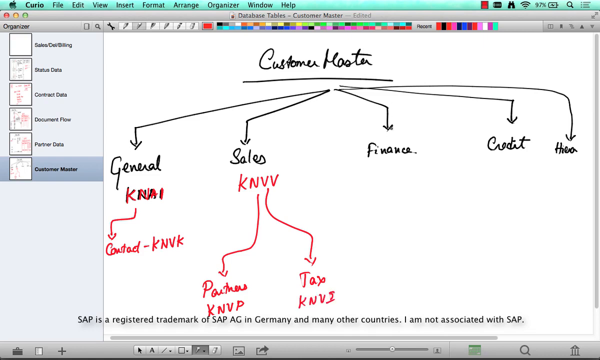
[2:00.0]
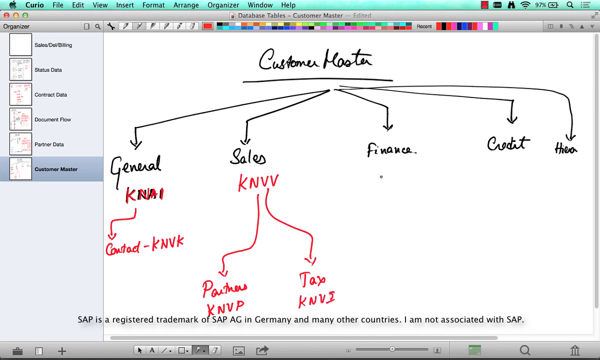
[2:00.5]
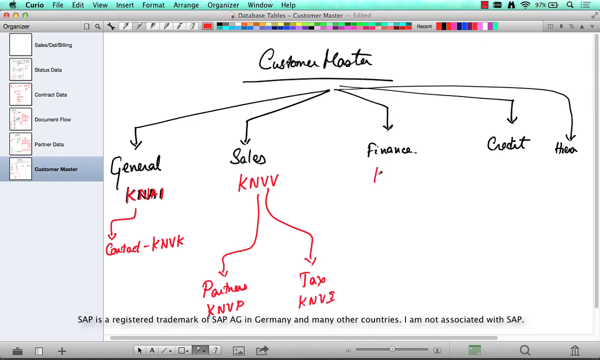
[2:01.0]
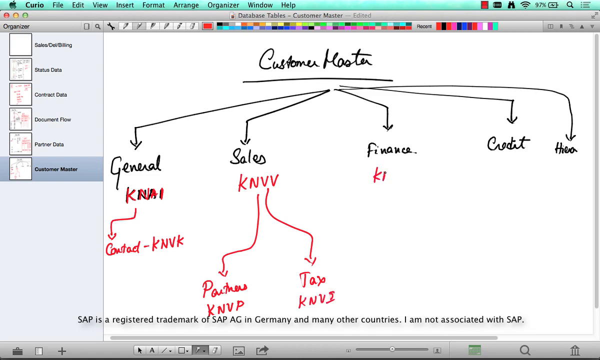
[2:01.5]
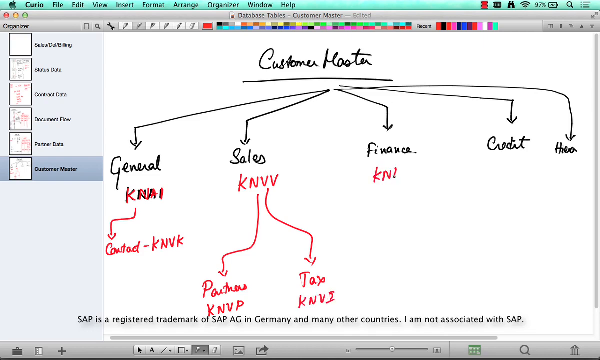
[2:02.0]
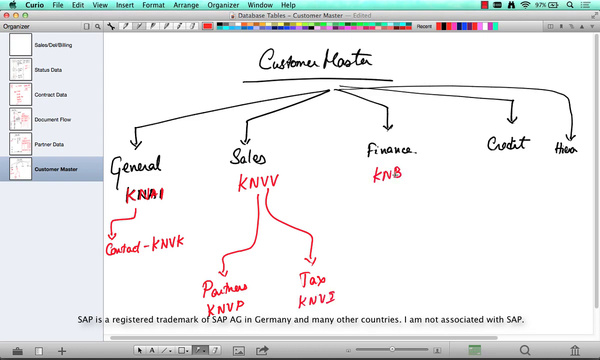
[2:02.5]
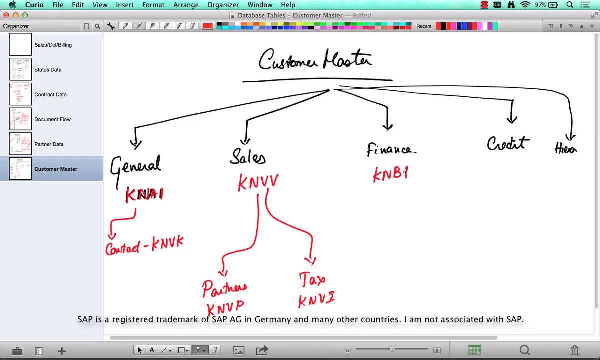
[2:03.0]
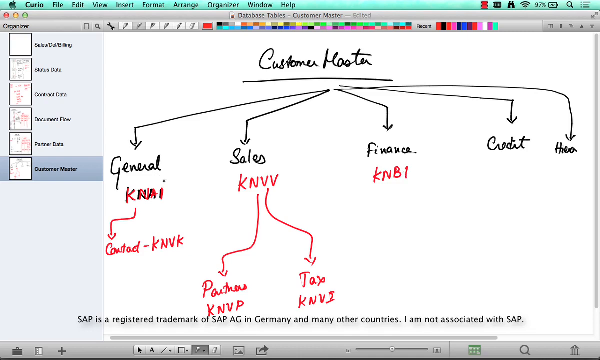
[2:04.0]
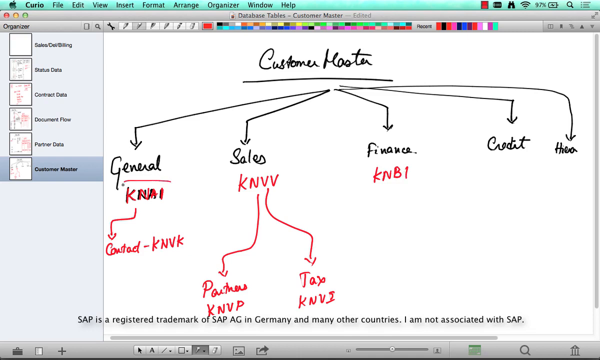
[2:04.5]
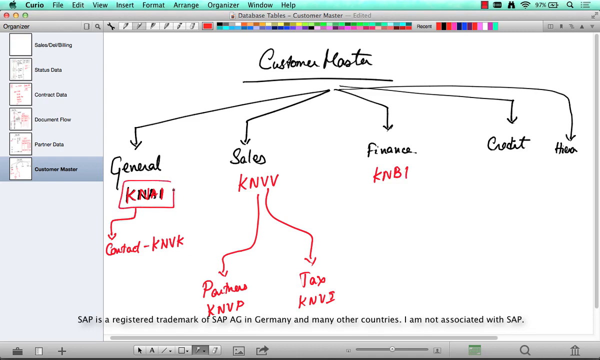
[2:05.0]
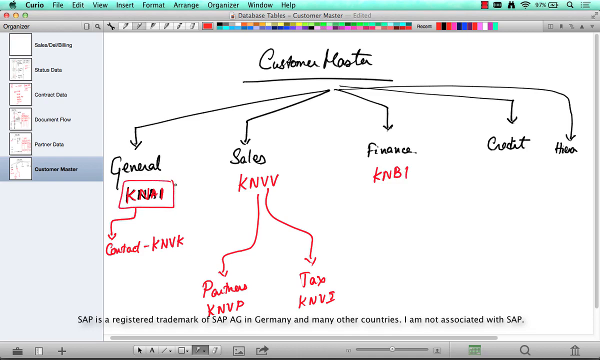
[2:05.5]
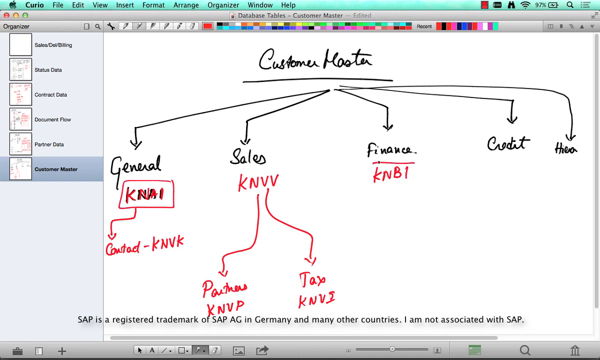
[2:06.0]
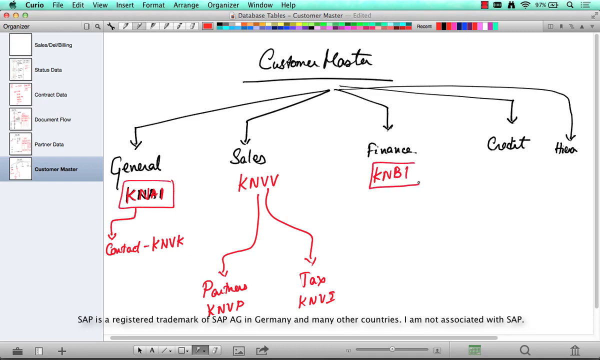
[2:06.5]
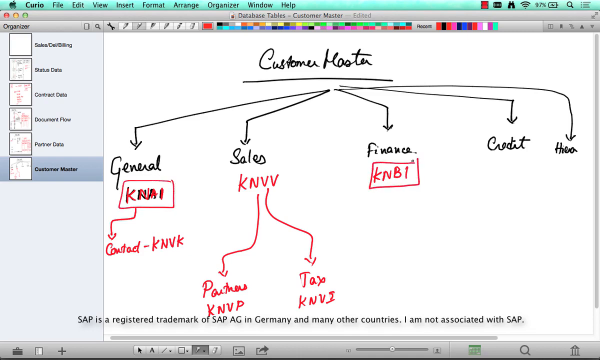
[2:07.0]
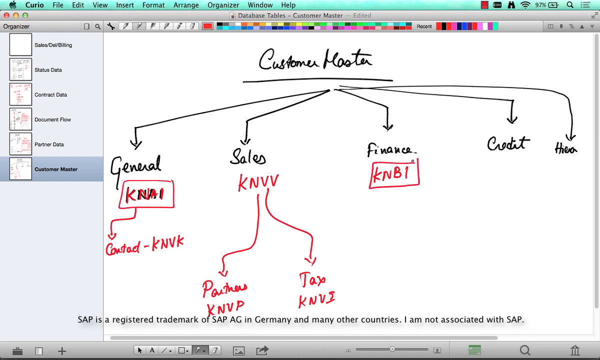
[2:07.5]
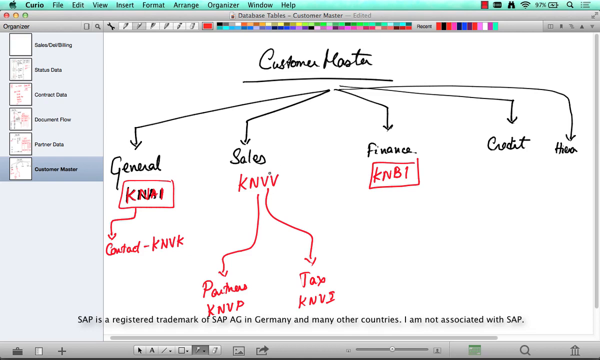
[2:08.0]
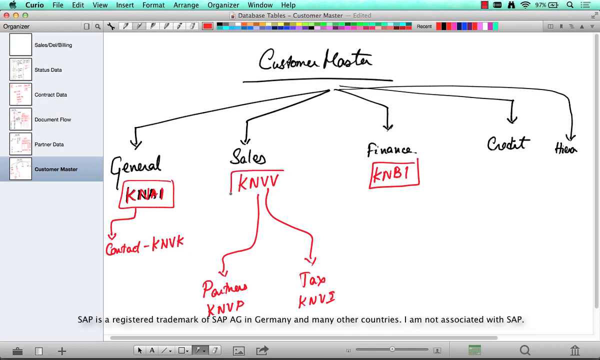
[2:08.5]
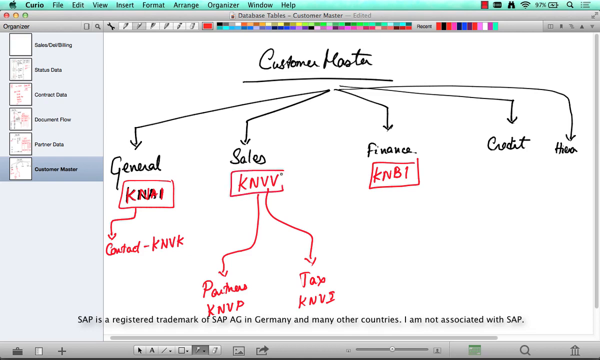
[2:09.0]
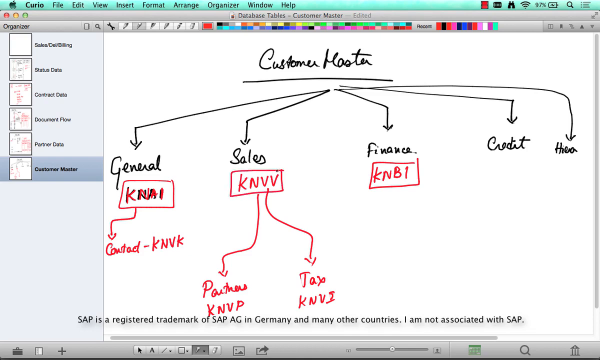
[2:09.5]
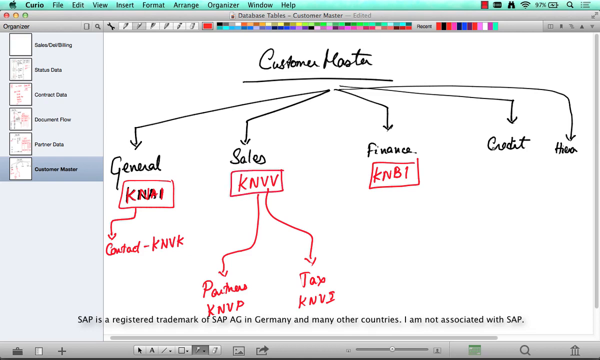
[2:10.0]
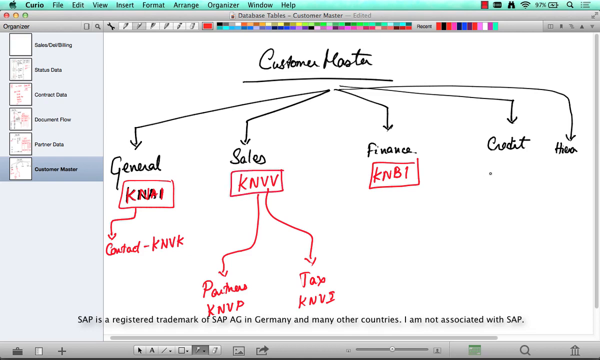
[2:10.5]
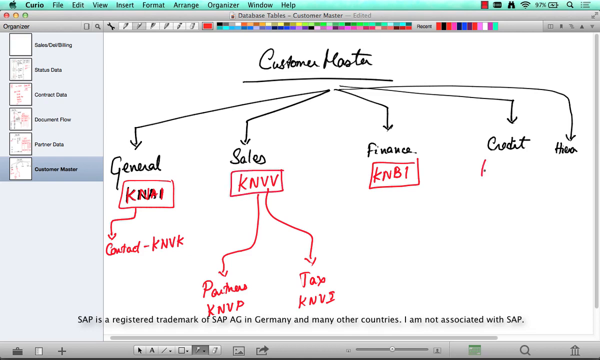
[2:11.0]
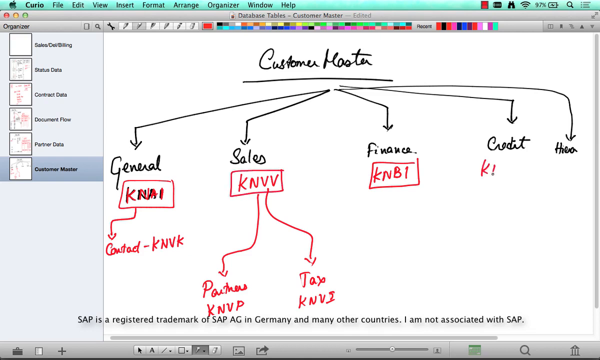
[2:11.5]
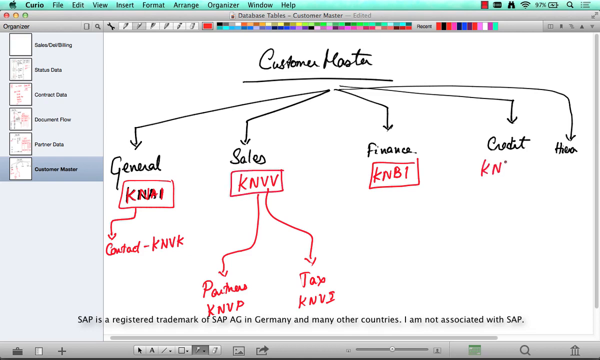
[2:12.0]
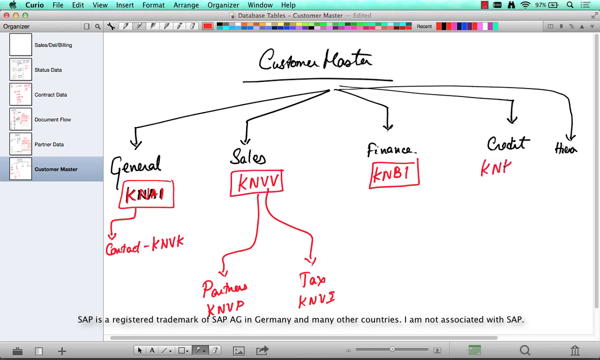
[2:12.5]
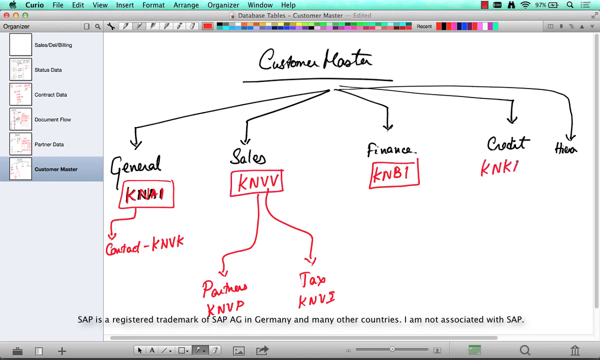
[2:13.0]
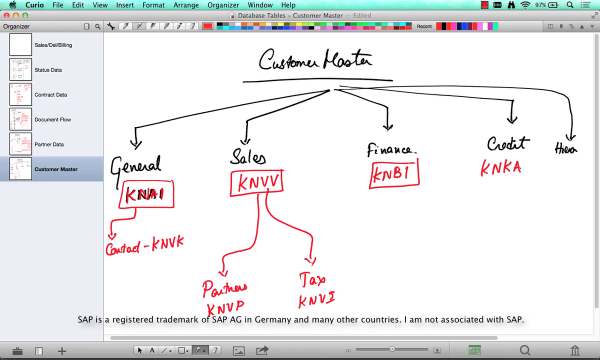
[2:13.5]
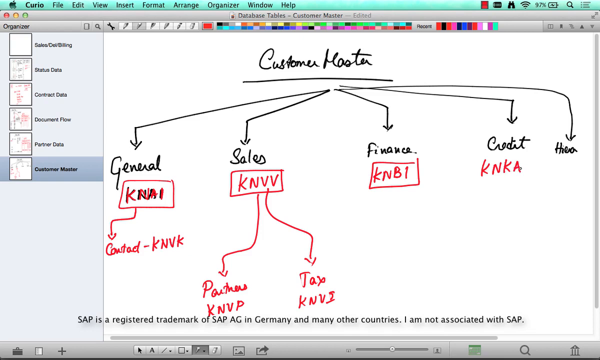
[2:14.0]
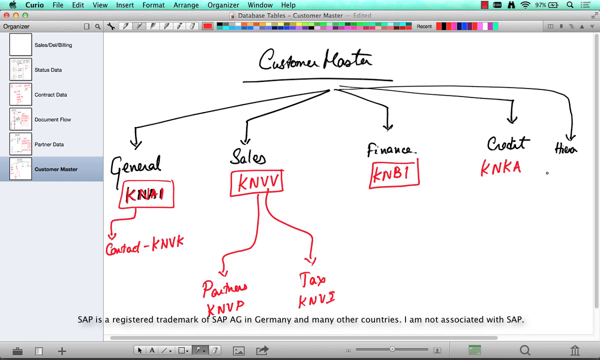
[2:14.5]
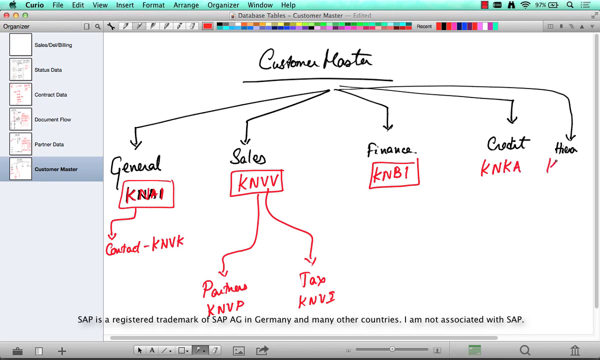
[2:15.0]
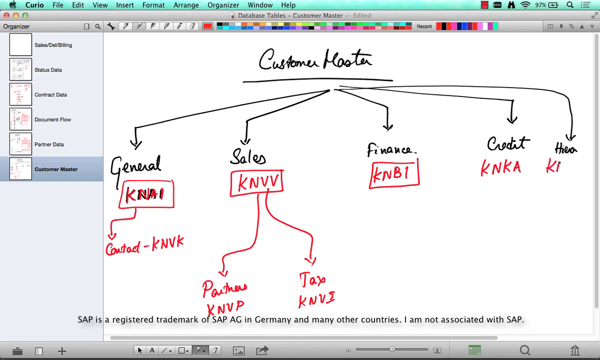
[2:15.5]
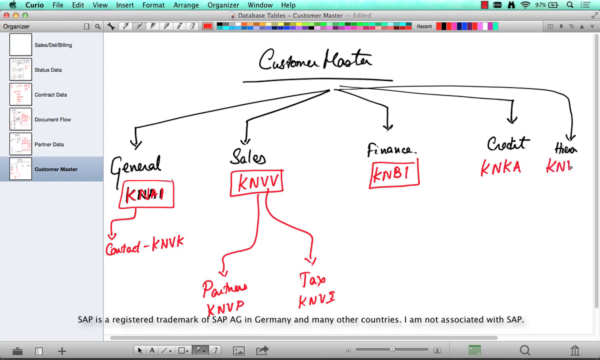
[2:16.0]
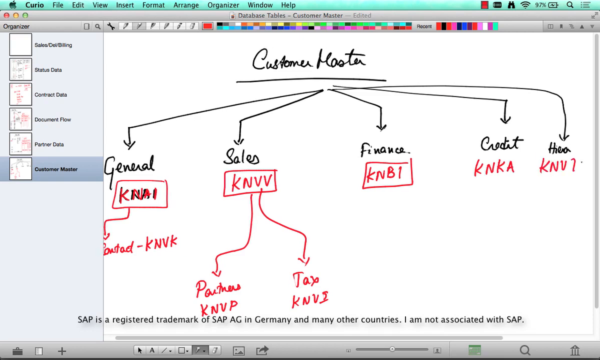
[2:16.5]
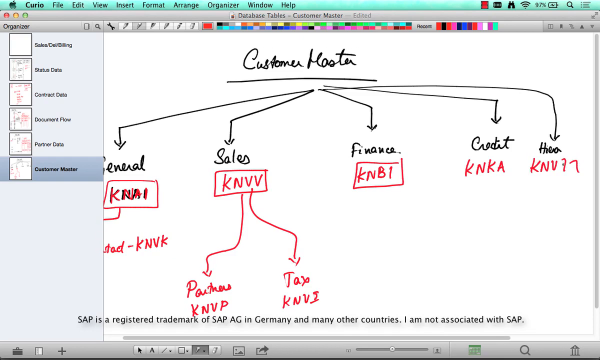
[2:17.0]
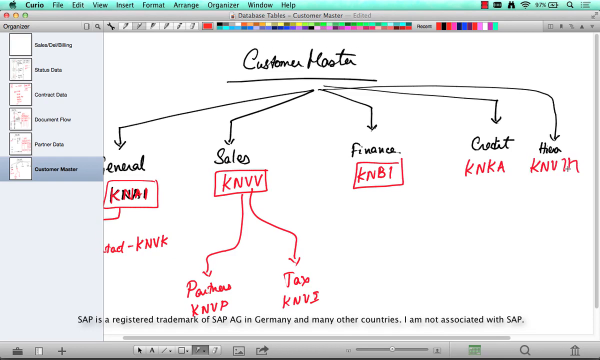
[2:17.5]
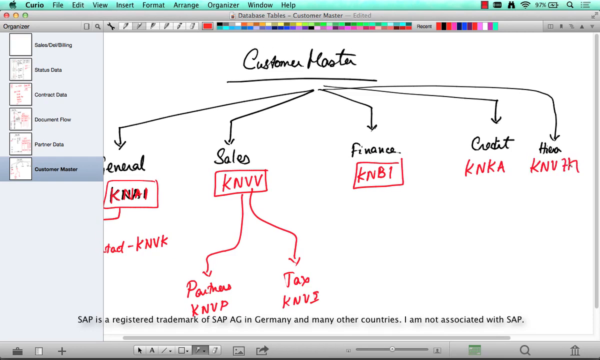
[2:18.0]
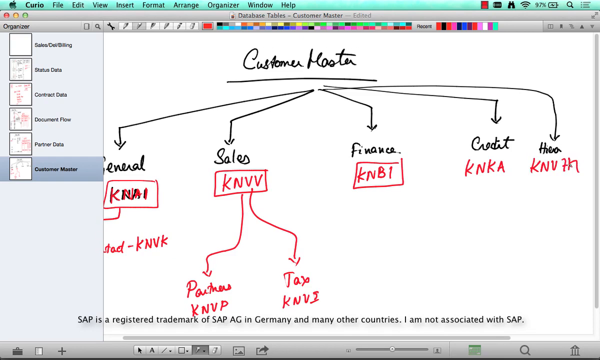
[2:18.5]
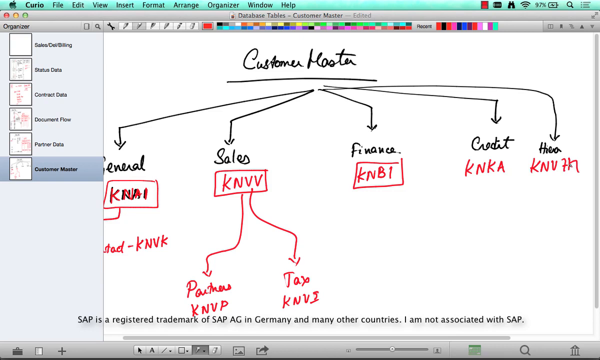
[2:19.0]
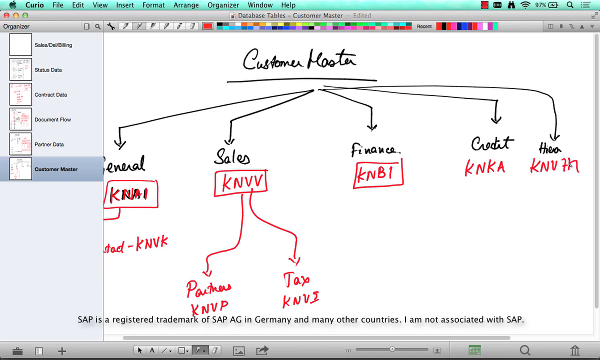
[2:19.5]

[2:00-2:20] Under the word finance, "KNBI" is written in red. Red rectangles are then drawn around the codes, so the codes under general, sales and finance each get a red square. Under credit, "KNKA" is written, and under the last heading, HEA, the code appears to be "KNVH7"; it is hard to see because it is squished at the very end, and the horizontal stroke of the H seems to be missing, or it is something else that is illegible. The codes under credit and HEA do not yet have red squares around them.